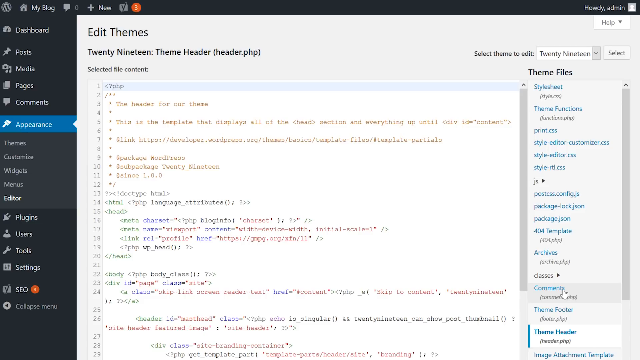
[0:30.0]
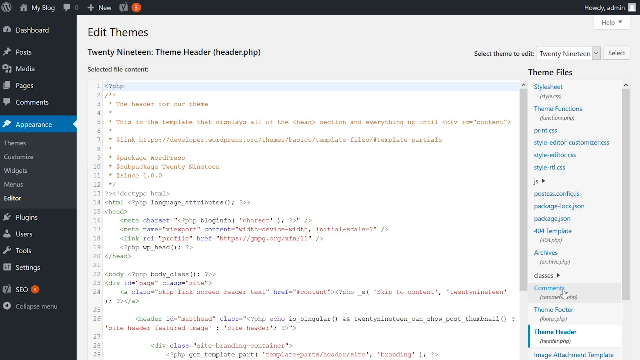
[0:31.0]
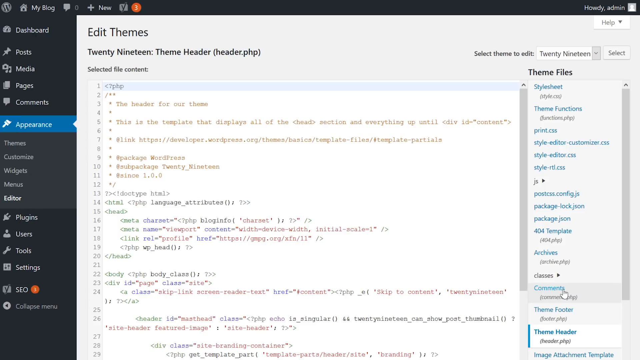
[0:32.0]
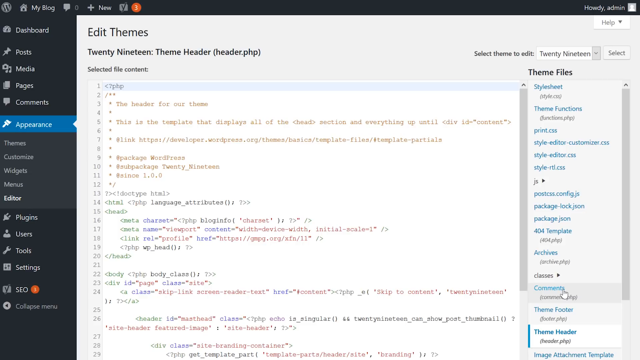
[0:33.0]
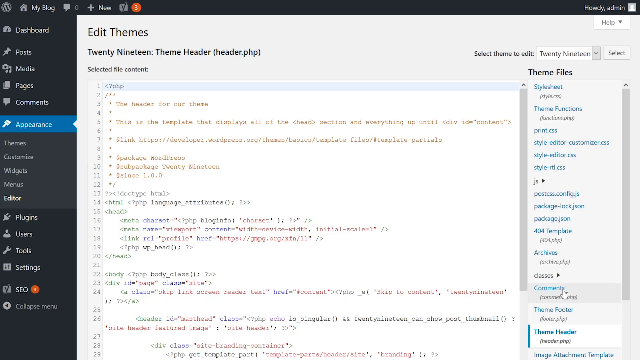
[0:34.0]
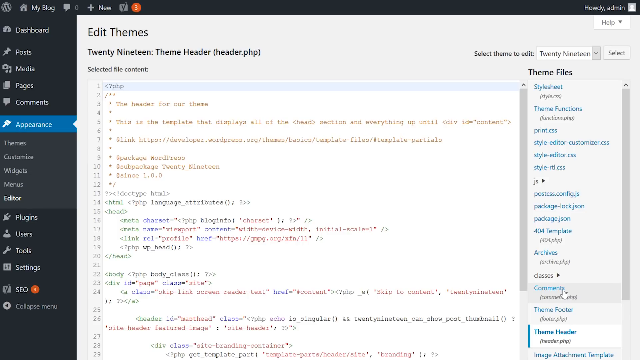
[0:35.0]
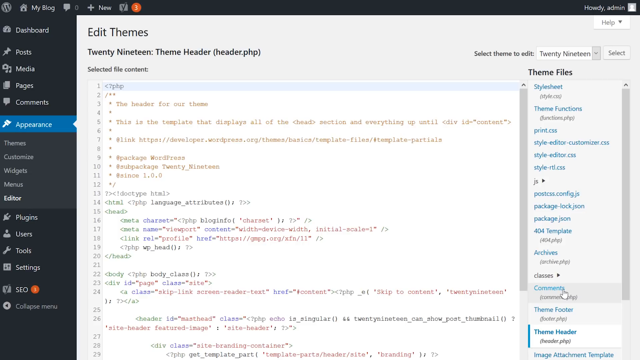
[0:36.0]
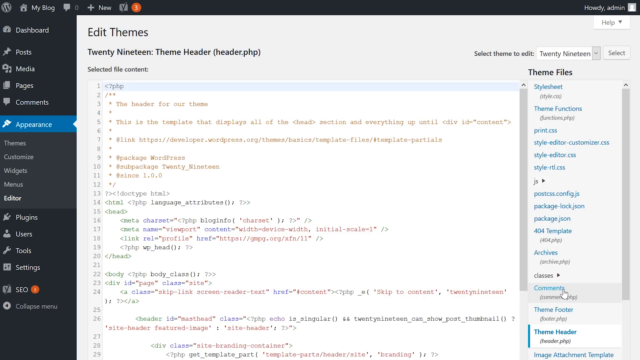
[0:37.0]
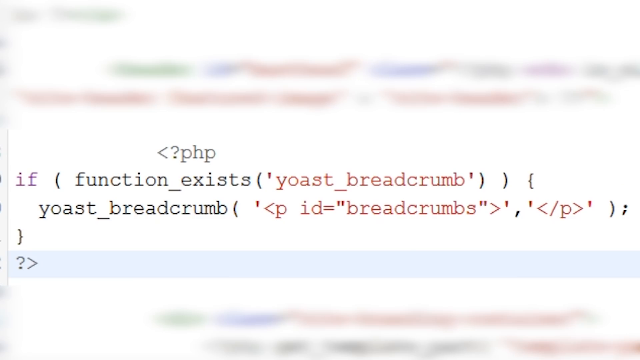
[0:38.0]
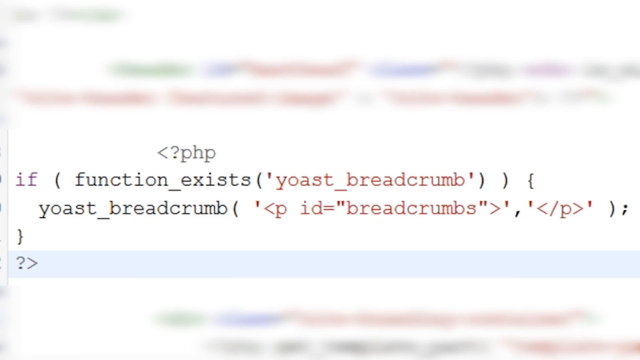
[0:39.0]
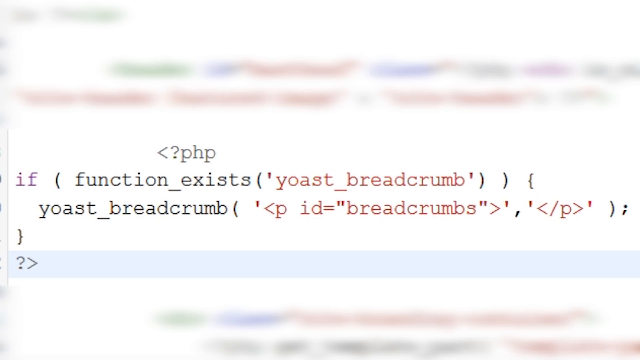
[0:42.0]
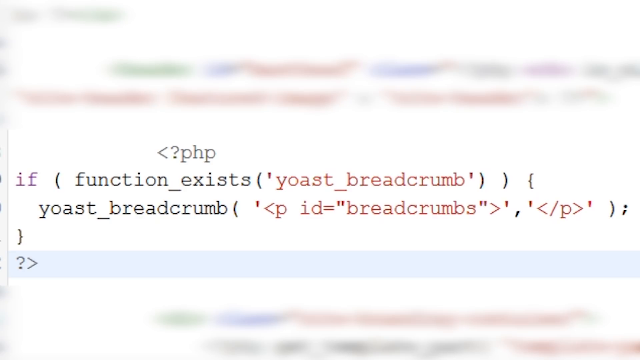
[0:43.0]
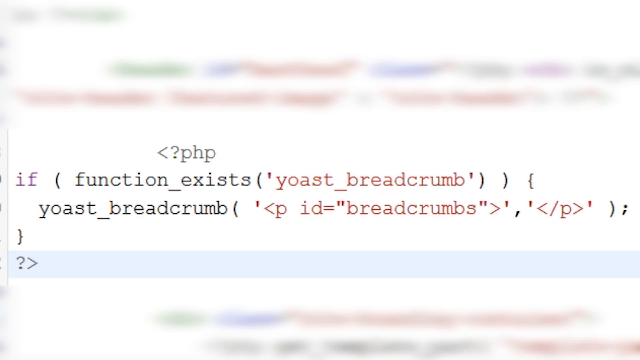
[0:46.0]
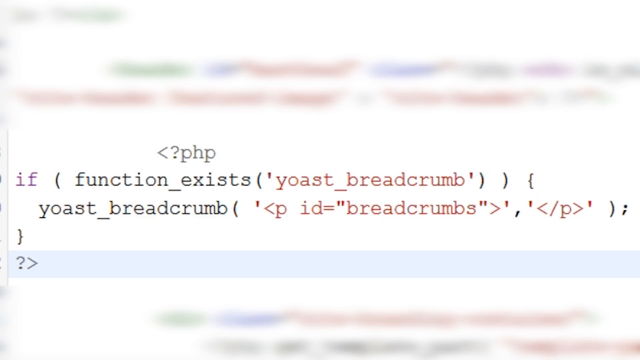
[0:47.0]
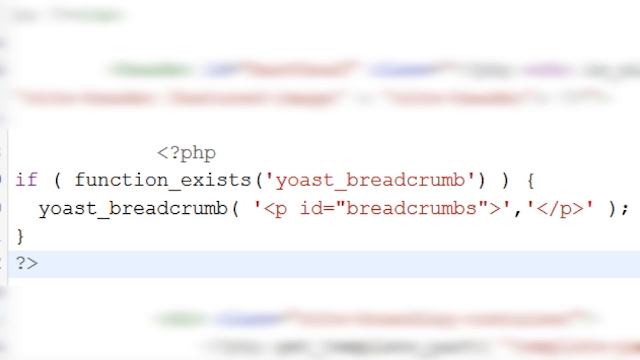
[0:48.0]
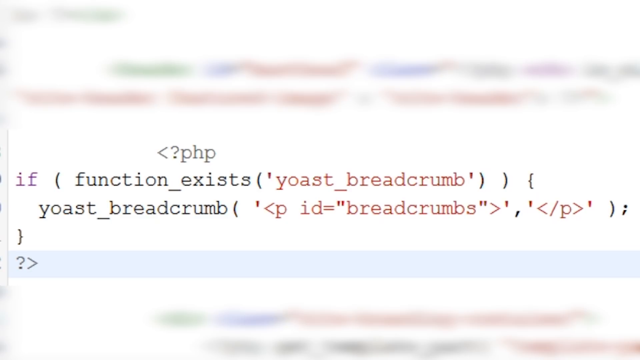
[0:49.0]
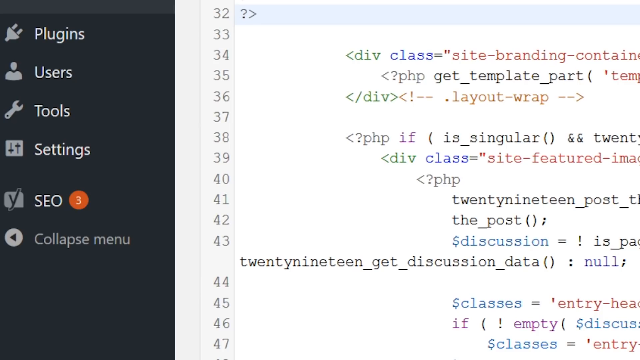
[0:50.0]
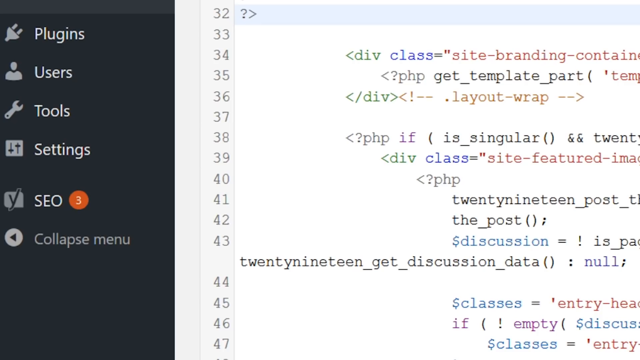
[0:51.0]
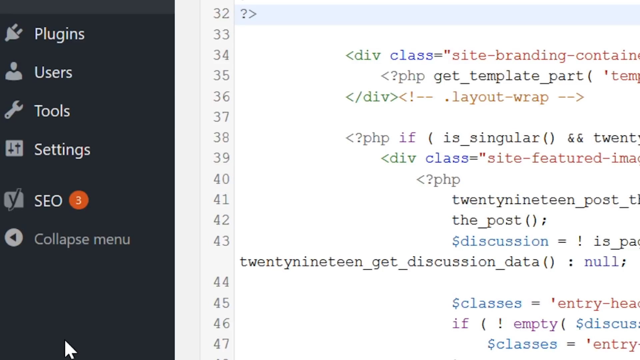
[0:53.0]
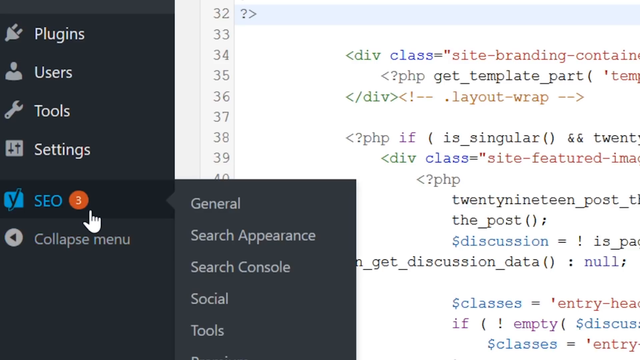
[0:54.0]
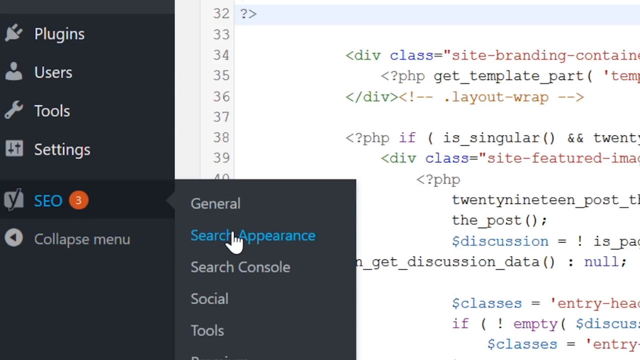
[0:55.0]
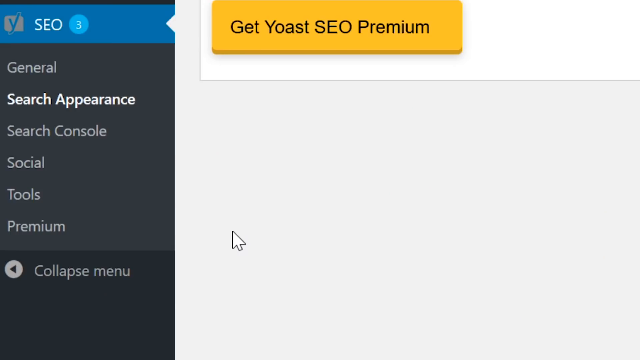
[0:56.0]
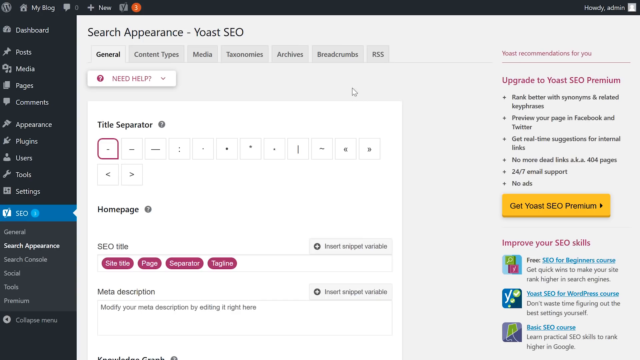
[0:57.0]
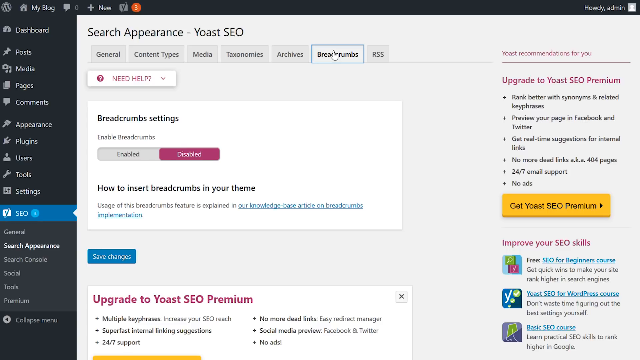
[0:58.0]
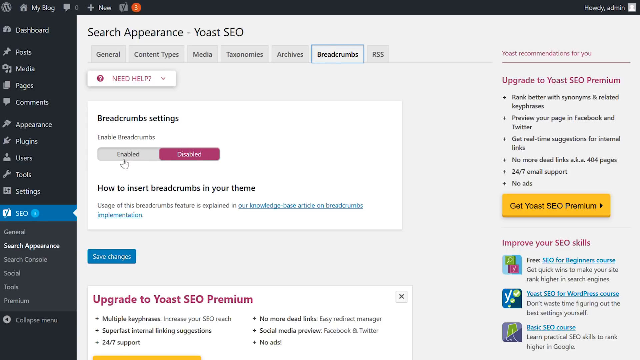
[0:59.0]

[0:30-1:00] The Edit Themes page under the Appearance tab of the dashboard is shown. The screen stays on it for a few seconds before zooming in on part of the script in the middle of the screen, a section indicating that the function exists, "yoast_breadcrumb", with the rest blurred around it. This stays in view until the video zooms out to show a bigger portion of the script, with the options sidebar on the left beside it. The view zooms to the top left, and the user hovers the mouse over the SEO section, which has a little three in an orange circle beside it. Different options pop up beside it, and the user clicks Search Appearance. This opens the Search Appearance Yoast SEO tab, a customization screen where title separators and other options can be chosen and edited. The user moves the mouse to the Breadcrumbs tab at the top, the sixth of seven options, and enables the breadcrumb setting, moving the pink bar from Disabled over to Enabled.